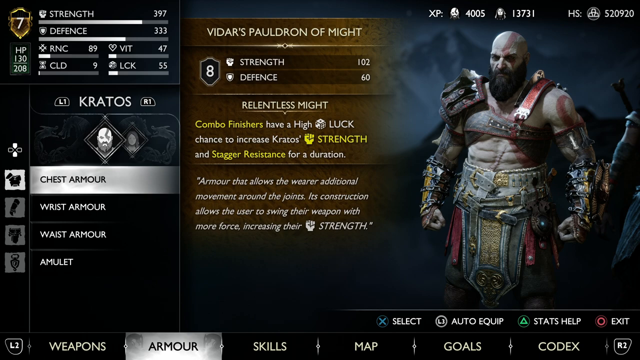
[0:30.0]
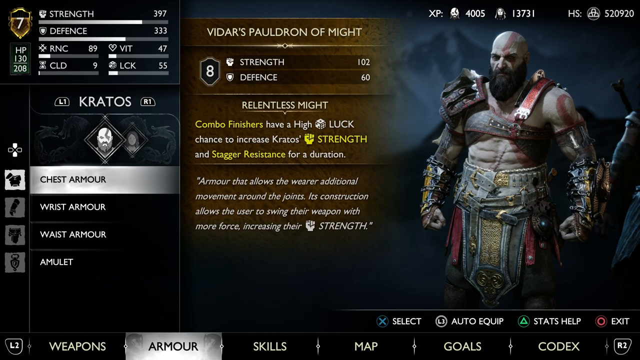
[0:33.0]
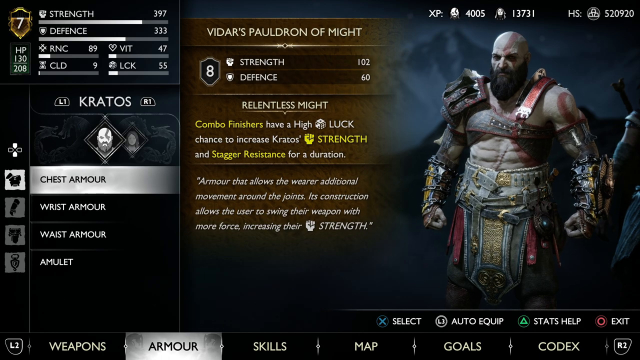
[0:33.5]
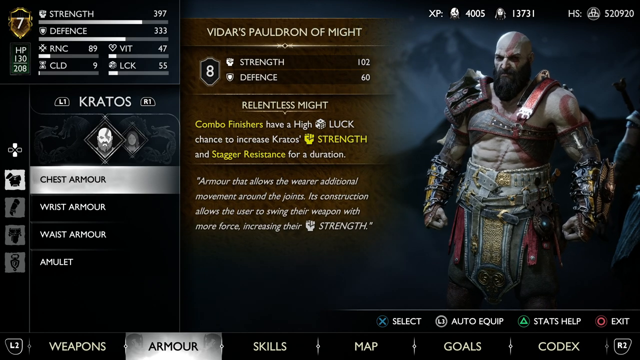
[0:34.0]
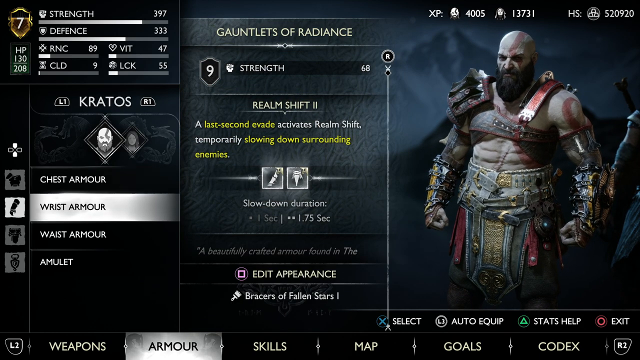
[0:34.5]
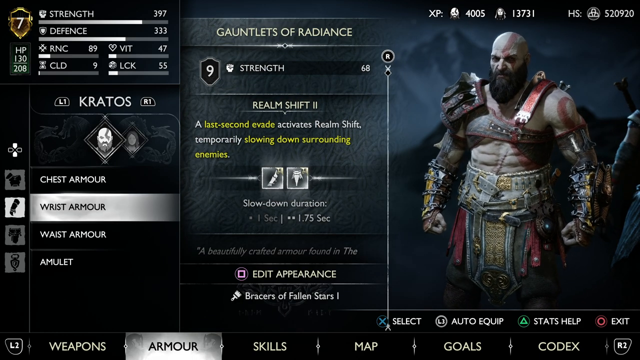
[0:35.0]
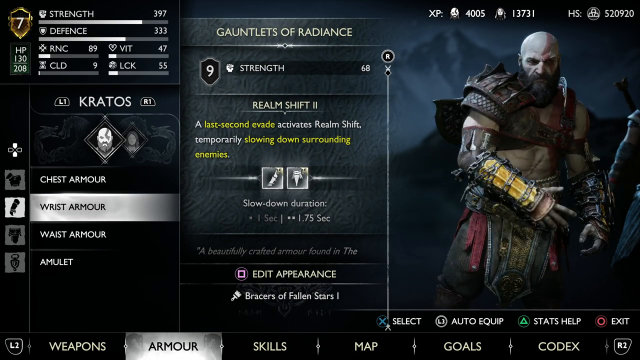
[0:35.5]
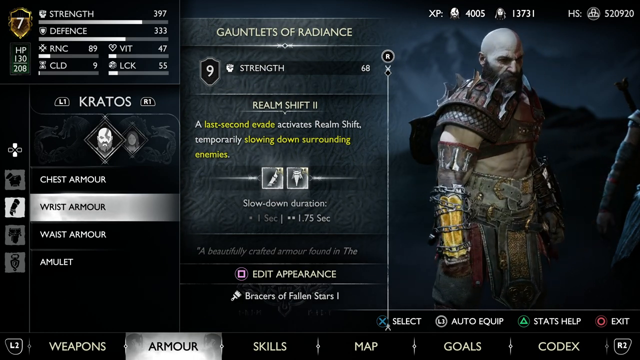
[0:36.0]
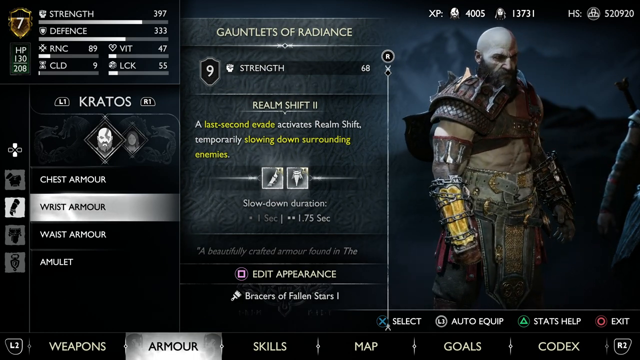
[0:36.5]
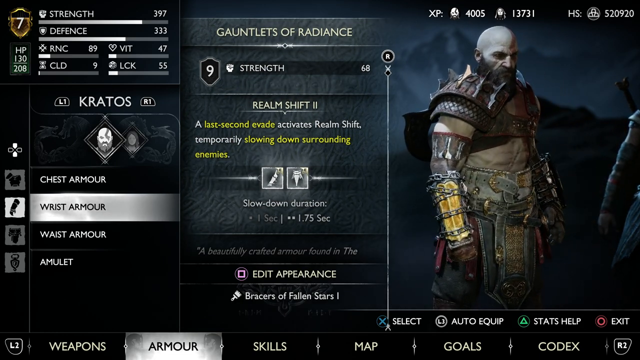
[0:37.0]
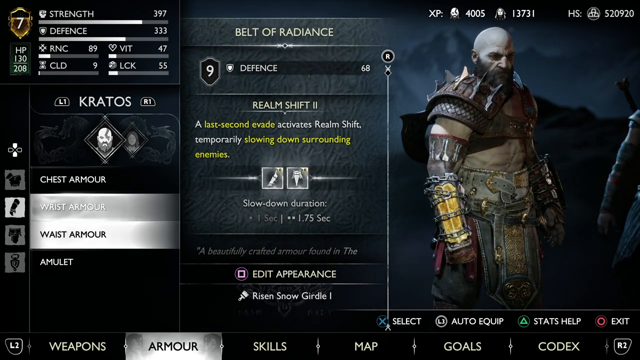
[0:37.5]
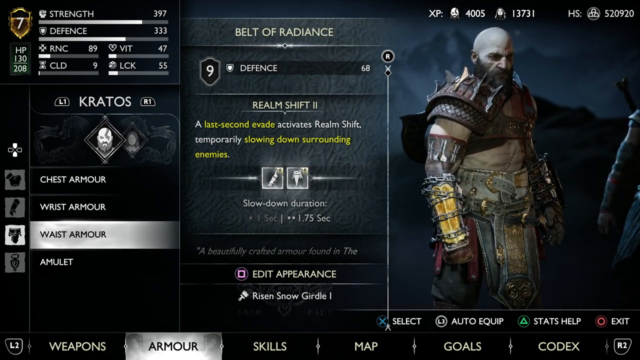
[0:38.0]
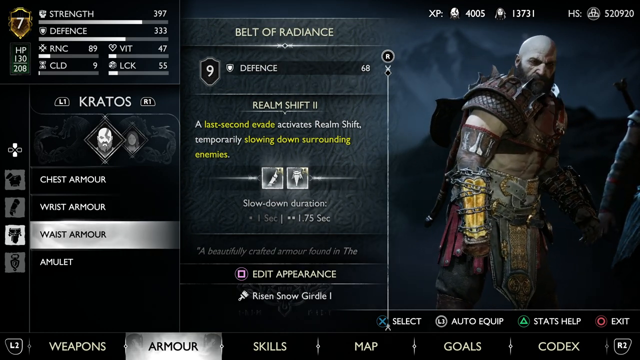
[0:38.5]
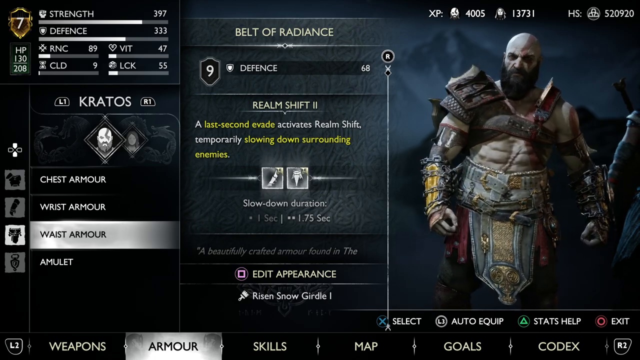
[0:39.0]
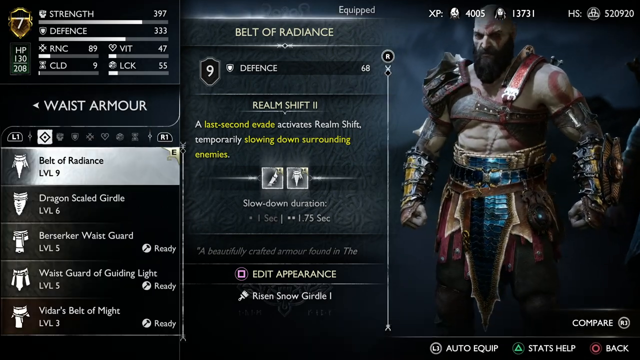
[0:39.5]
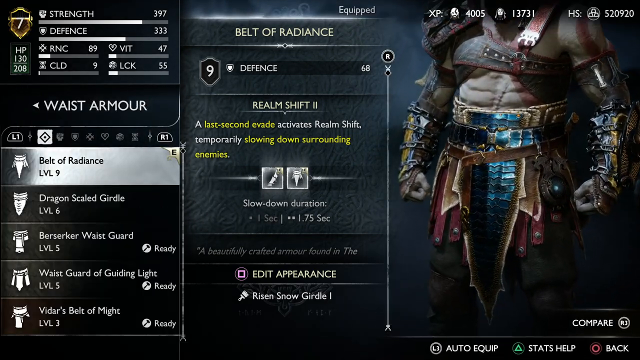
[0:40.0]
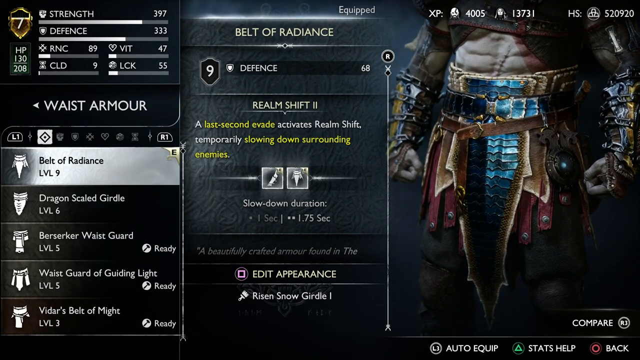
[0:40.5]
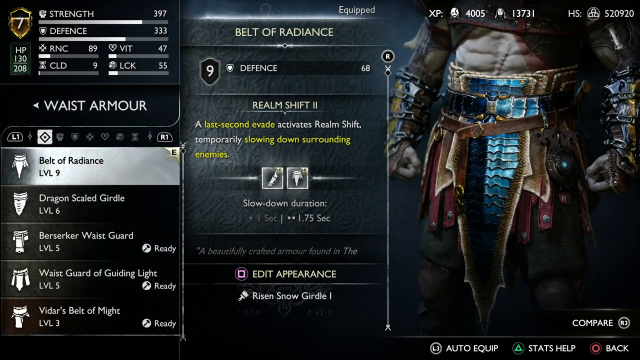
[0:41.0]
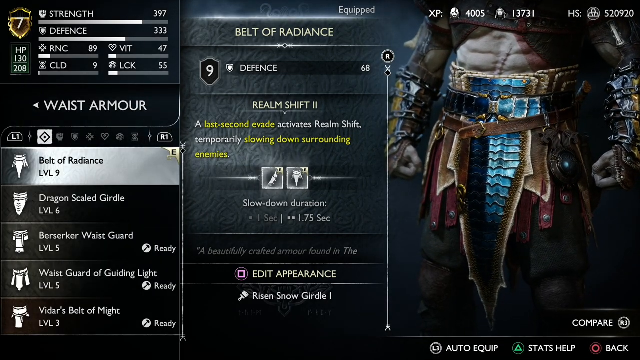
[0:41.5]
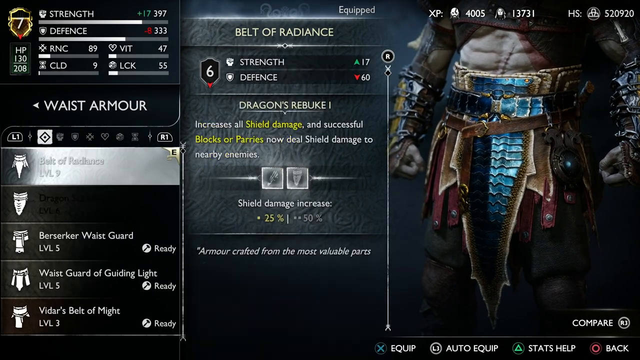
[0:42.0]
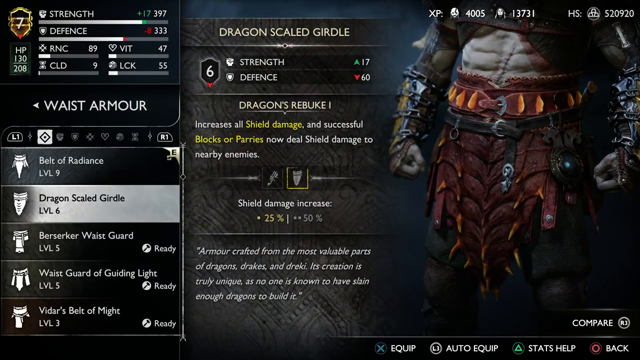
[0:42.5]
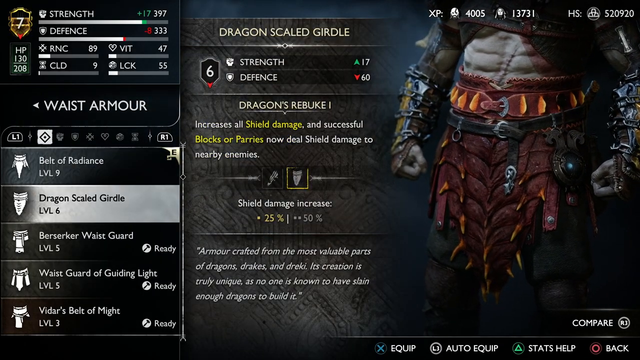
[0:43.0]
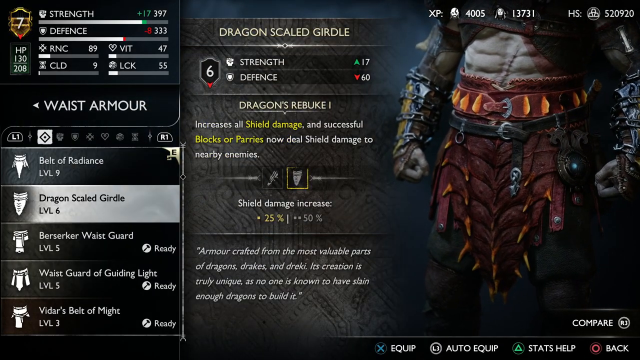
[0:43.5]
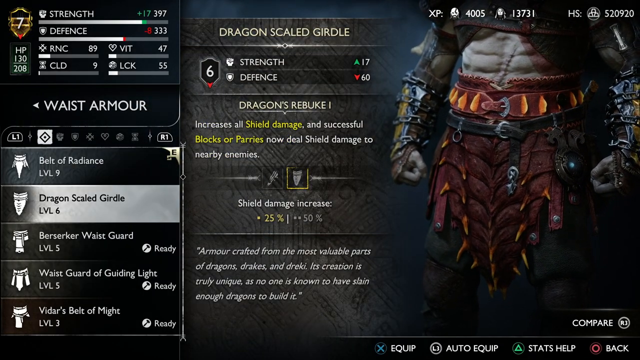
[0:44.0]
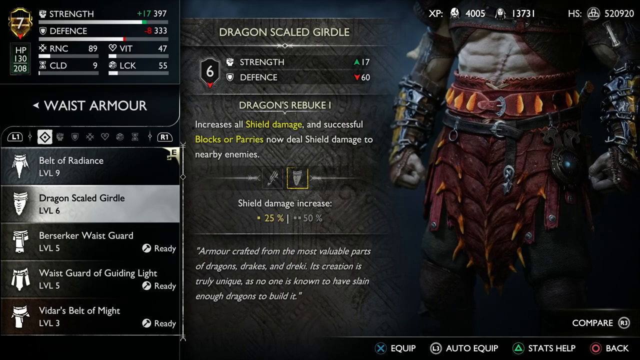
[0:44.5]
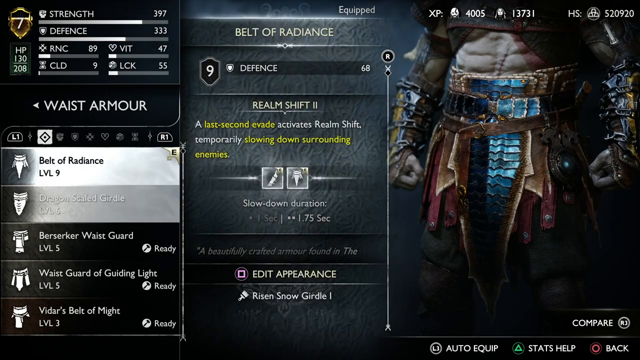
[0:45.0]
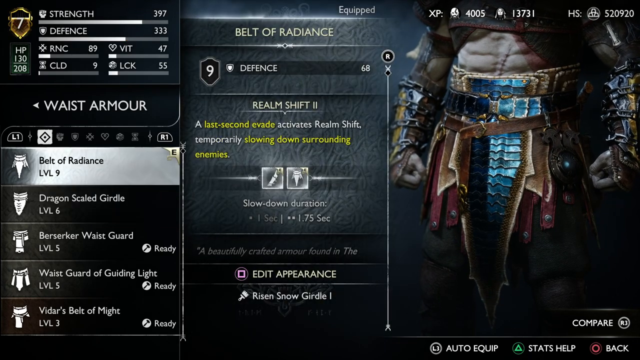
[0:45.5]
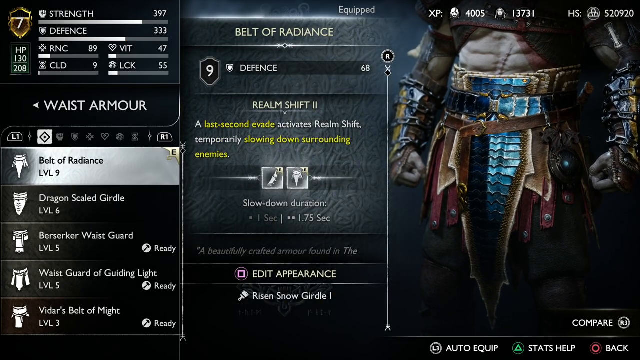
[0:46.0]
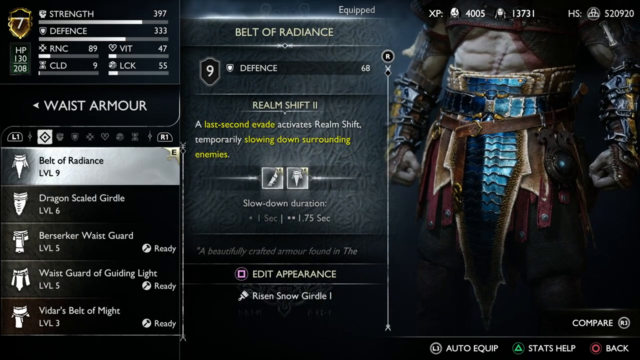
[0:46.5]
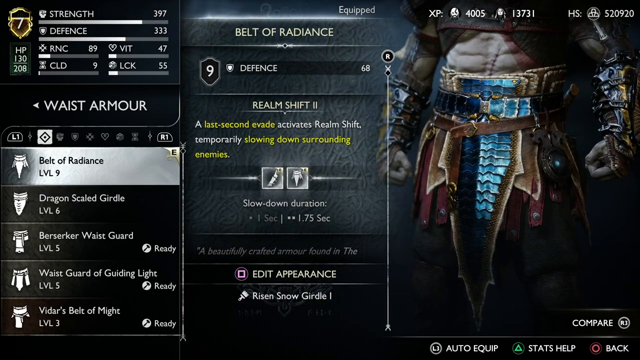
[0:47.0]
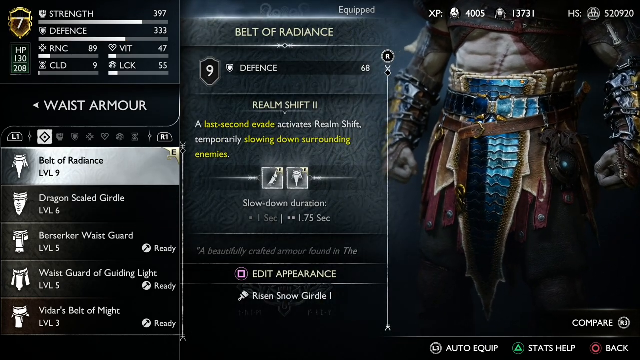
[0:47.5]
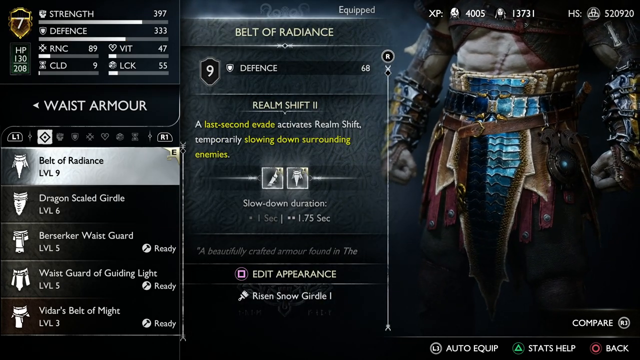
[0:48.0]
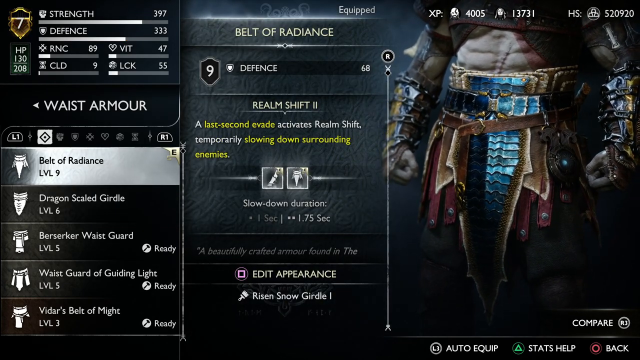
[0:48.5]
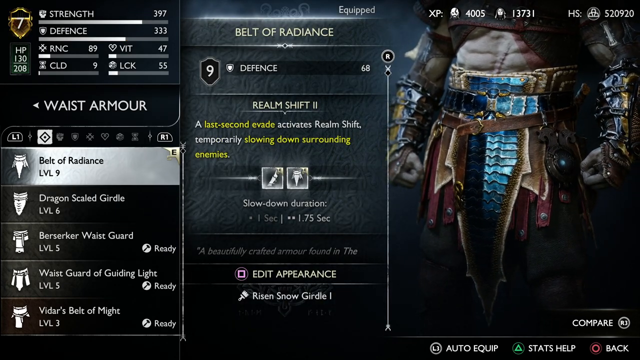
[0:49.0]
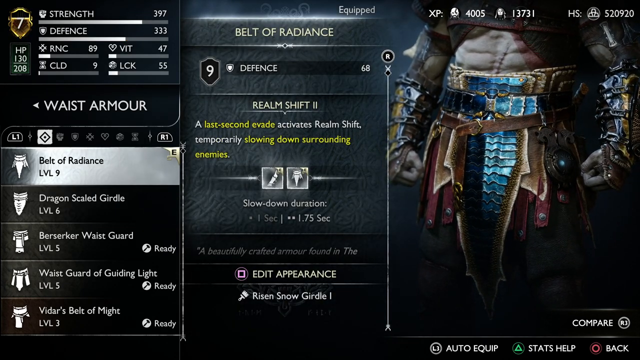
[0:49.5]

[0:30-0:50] Kratos appears in the customization menu, standing off to the right, previewing his appearance. He seems to be previewed with different chest armors as the player hovers over the chest armor section of the menu. The player scrolls down to wrist armor, and Kratos, standing and previewing the choices, gestures forward with his right hand to show off the wrist armor. The player goes back to waist armor; Kratos steps back and the camera zooms into his waist. The player scrolls through different waist armors. The first one selected, the Belt of Radiance, looks like it is made of blue-scaled armor and orange and red cloth, like leather strips. Its stats are listed in the middle of the screen, and it appears to have an ability called Realm Shift.